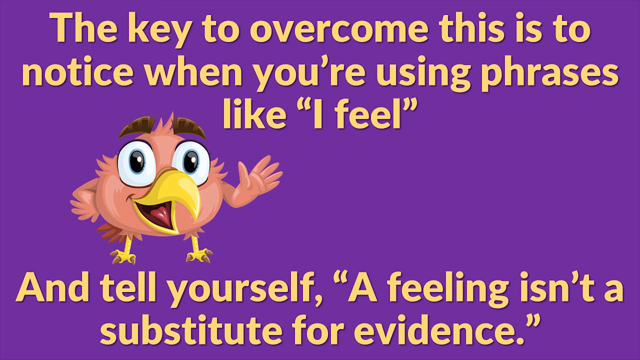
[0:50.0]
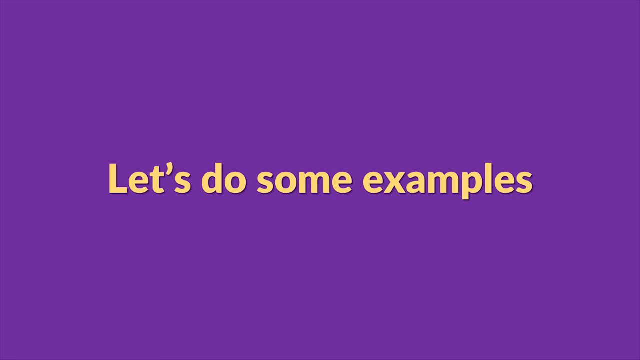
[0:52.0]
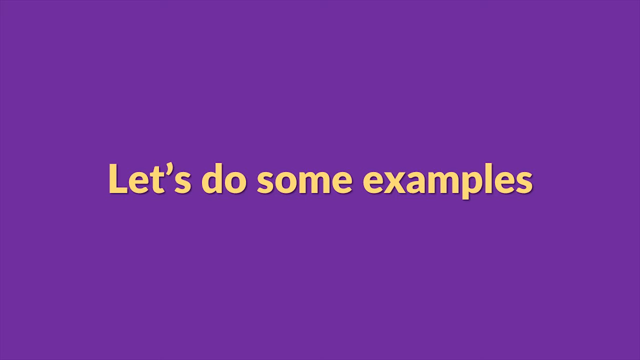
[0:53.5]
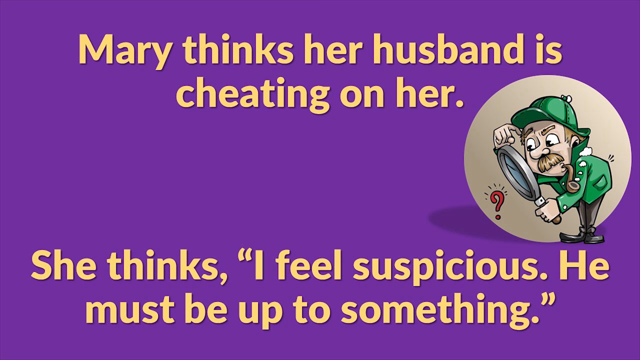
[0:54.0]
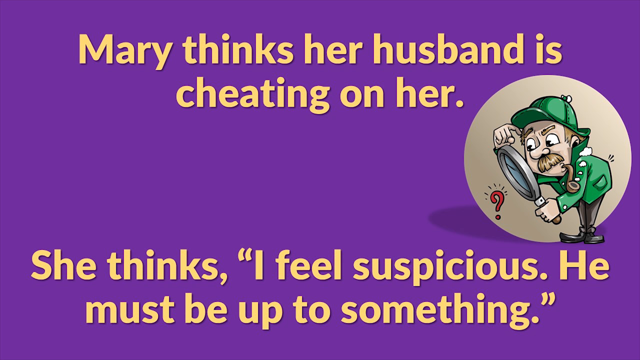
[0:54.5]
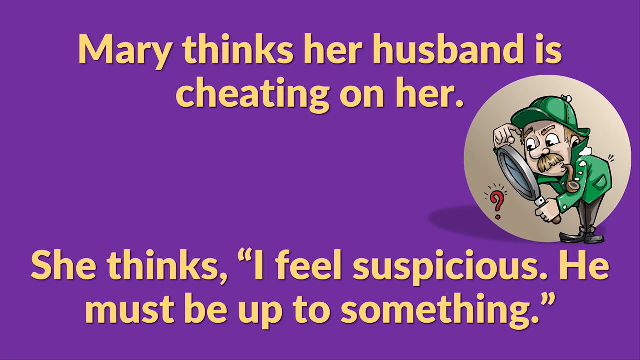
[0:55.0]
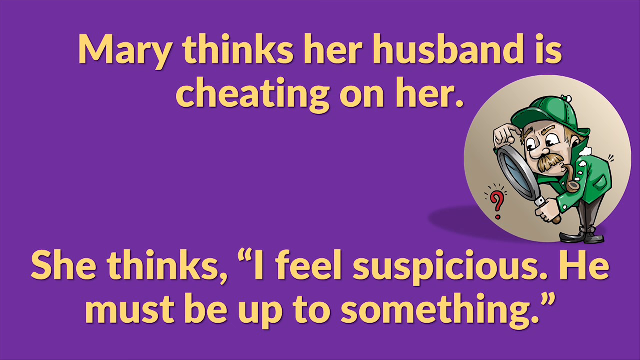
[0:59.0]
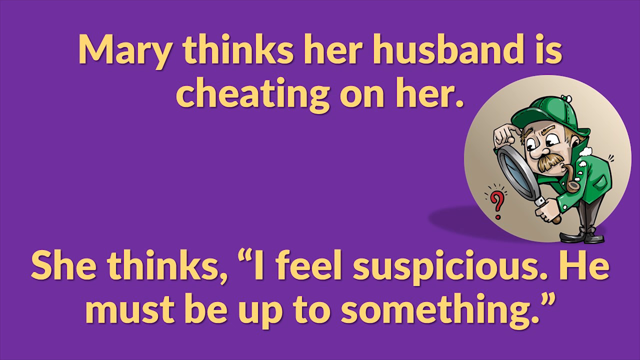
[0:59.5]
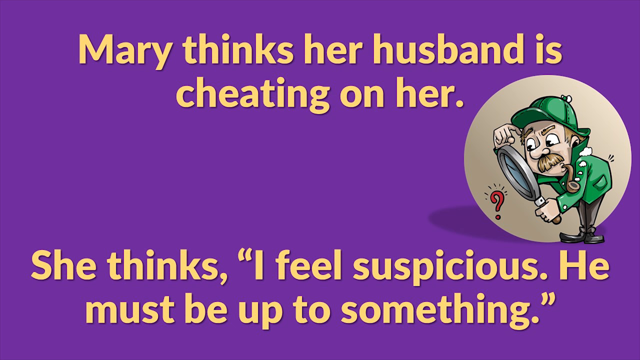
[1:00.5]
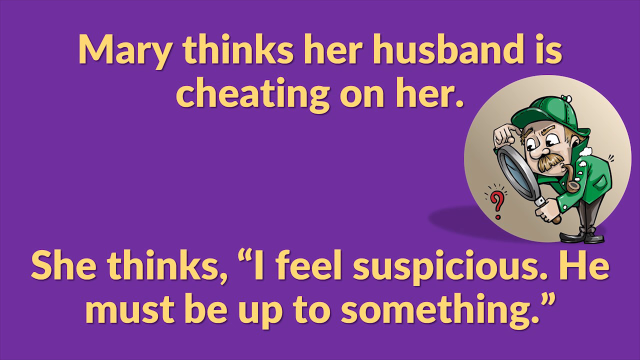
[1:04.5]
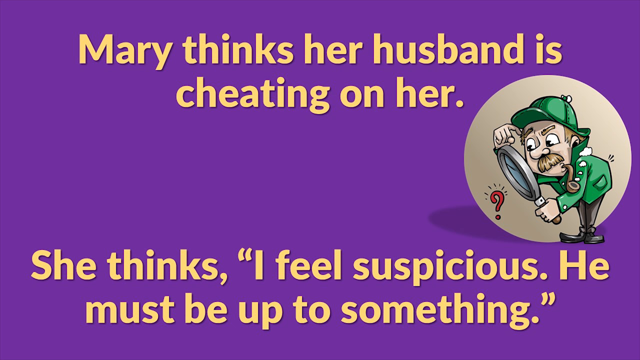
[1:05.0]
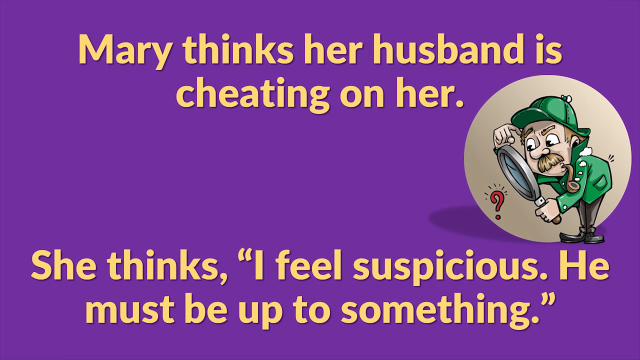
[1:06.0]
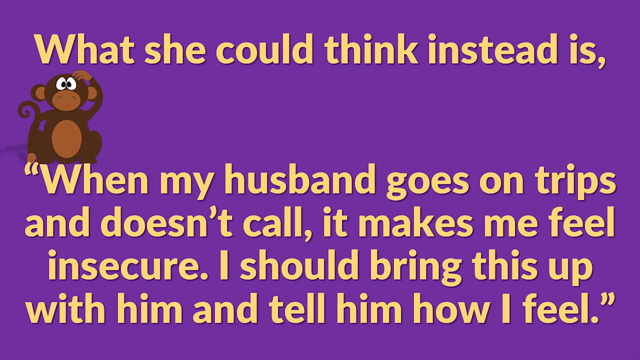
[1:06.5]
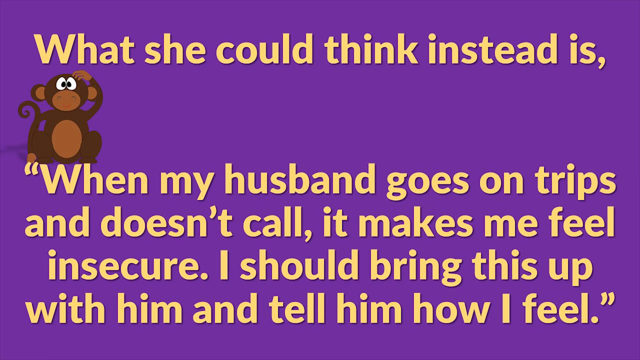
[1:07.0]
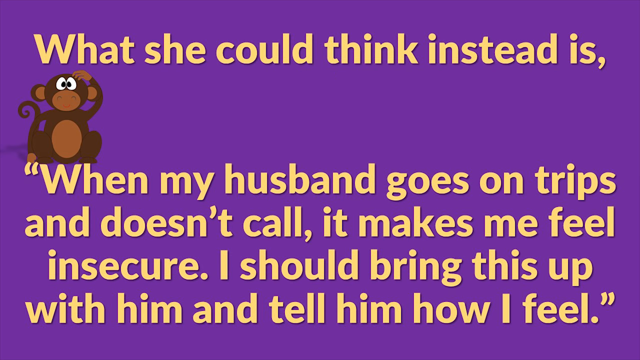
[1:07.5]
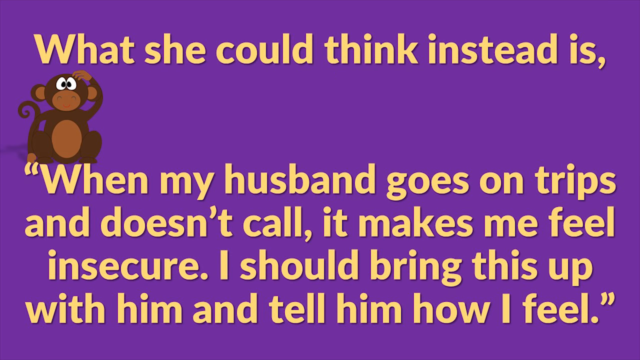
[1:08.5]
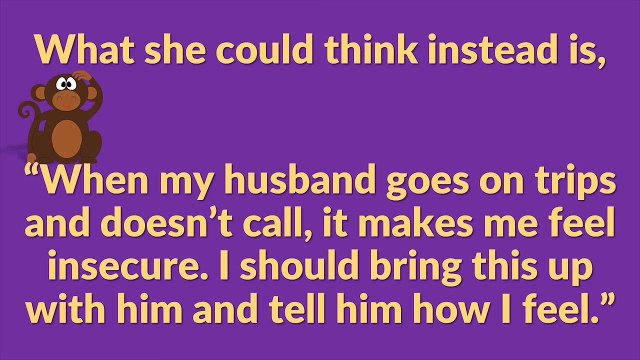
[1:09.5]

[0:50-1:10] On a purple background, yellow text reads: "Let's do some examples." The first example follows: "Mary thinks her husband is cheating on her." On the right-hand side of the screen is an animation of a man wearing a green hat, a green jacket and black pants, holding a microscope up close to a question mark. Text under that reads: "She thinks I feel suspicious. He must be up to something." The next screen has text reading "what she could think instead is", with an animation of a brown monkey below it. The text below the monkey says: "when my husband goes on trips and doesn't call it makes me feel insecure. I should bring this up with him and tell him how I feel".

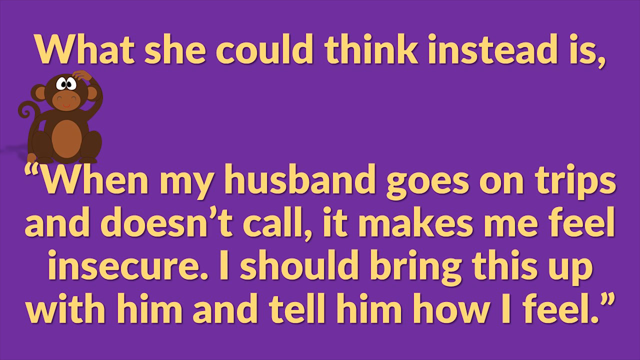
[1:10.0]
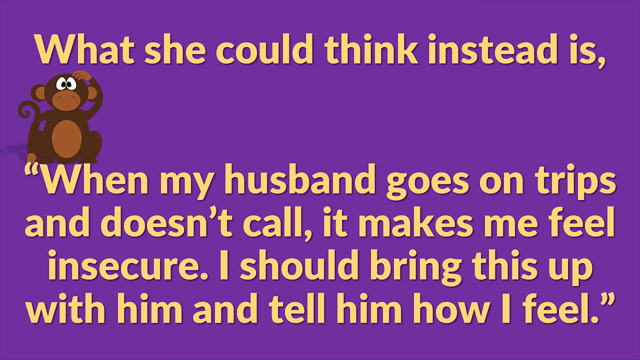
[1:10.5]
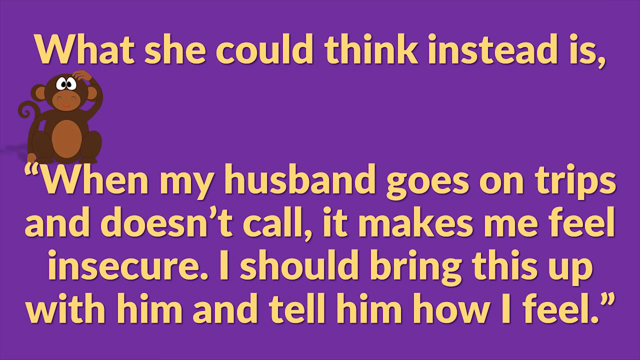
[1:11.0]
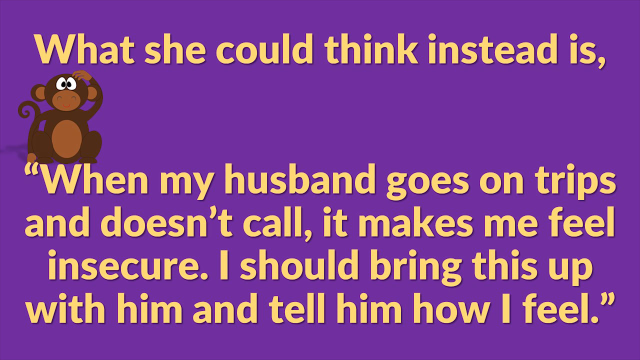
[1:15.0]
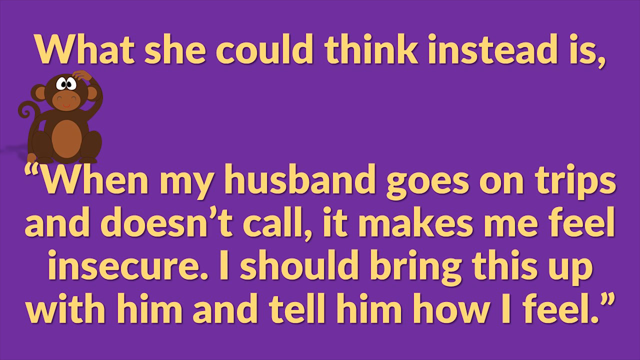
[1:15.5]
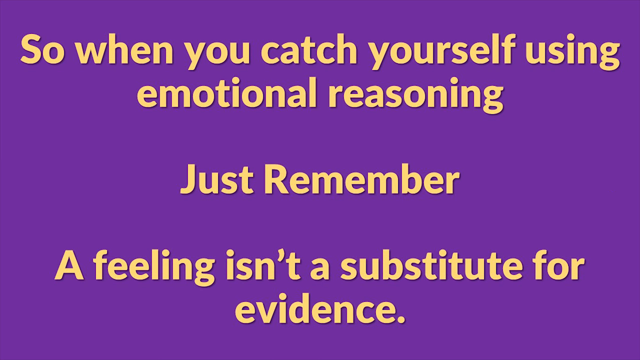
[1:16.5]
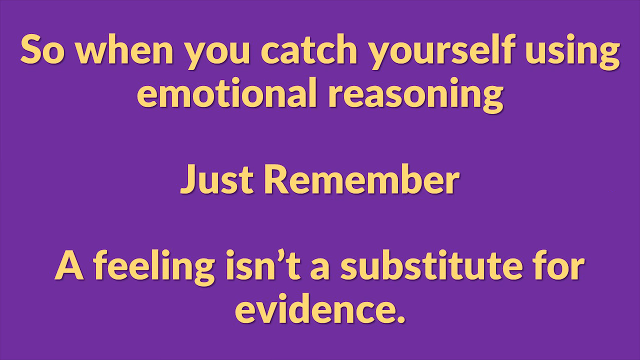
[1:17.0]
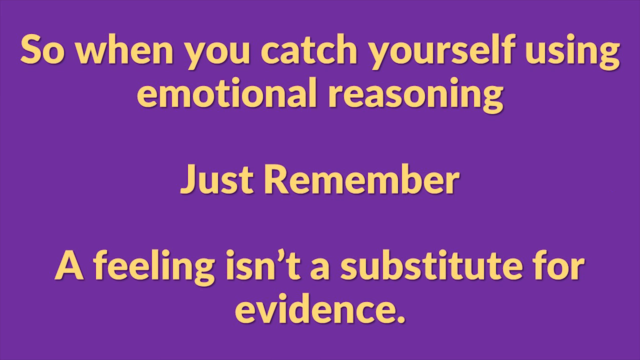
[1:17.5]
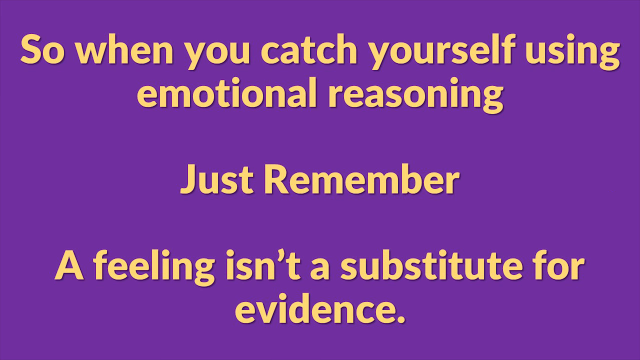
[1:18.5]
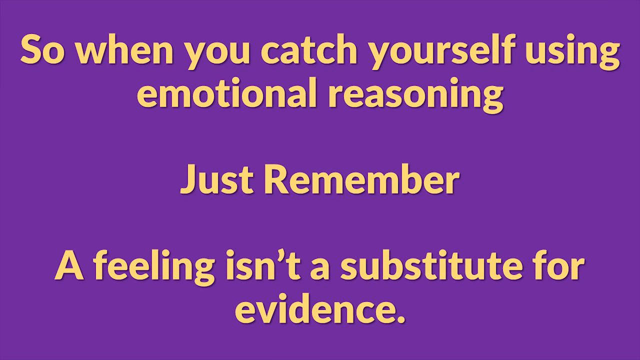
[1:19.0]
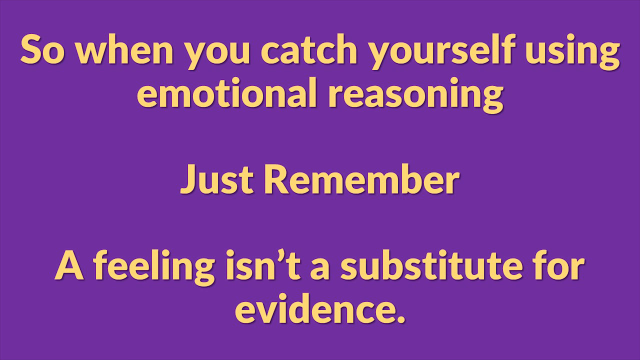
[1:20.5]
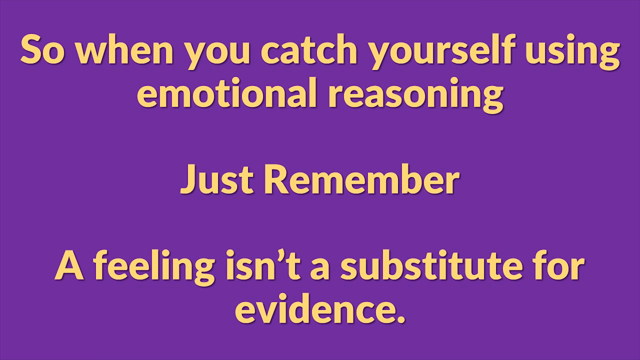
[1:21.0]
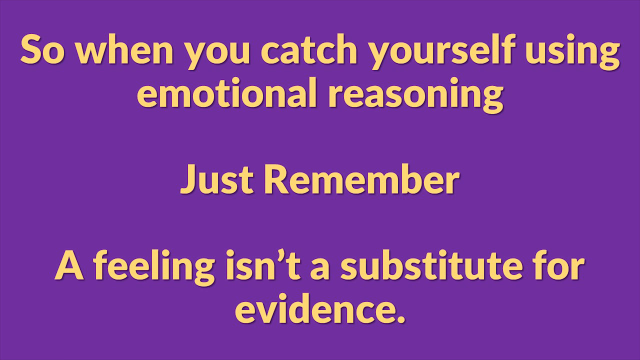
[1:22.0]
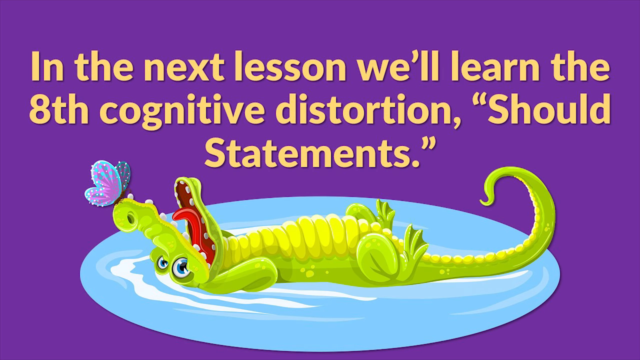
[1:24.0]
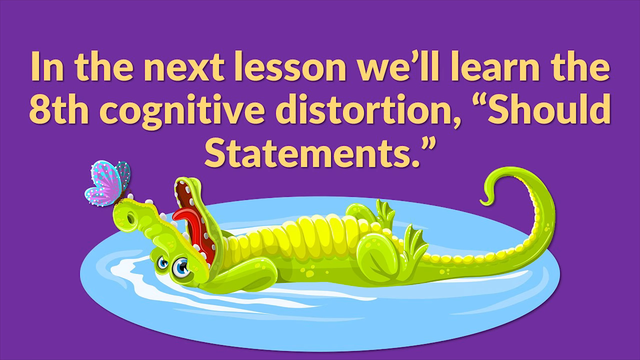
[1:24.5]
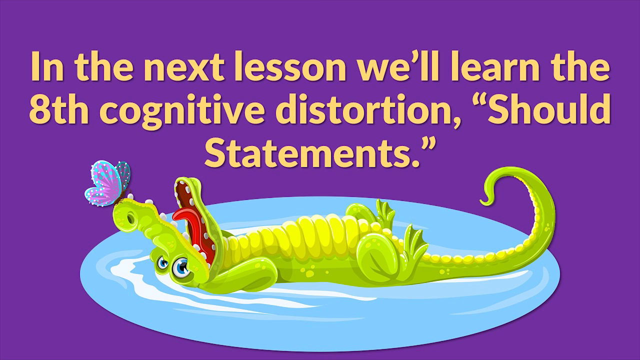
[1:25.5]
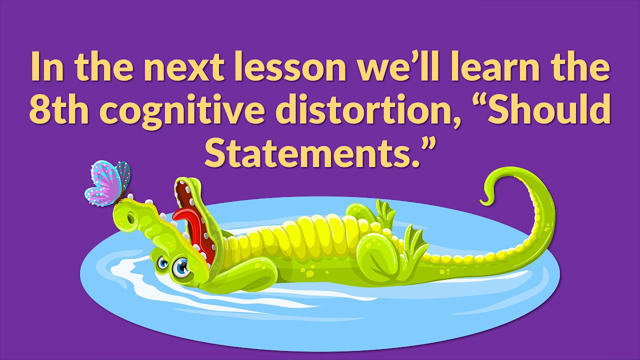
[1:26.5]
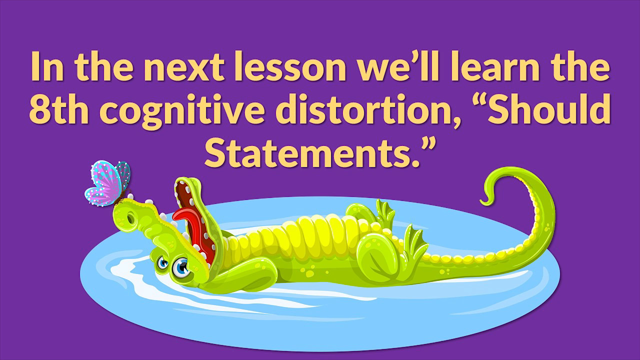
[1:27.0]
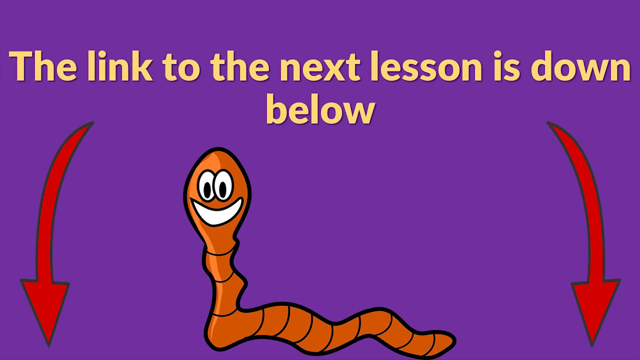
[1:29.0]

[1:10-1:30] On a purple background, yellow text reads: "So when you catch yourself using emotional reasoning just remember a feeling isn't a substitute for evidence". Another screen says: "in the next lesson we will learn the eighth cognitive distortion should statements". Below that is an animation of a light green crocodile that is faced up, with a butterfly on its nose. Its mouth is open, showing a red tongue and white teeth. The butterfly sitting on its nose is purple and blue. Below the crocodile is a light blue puddle of water.